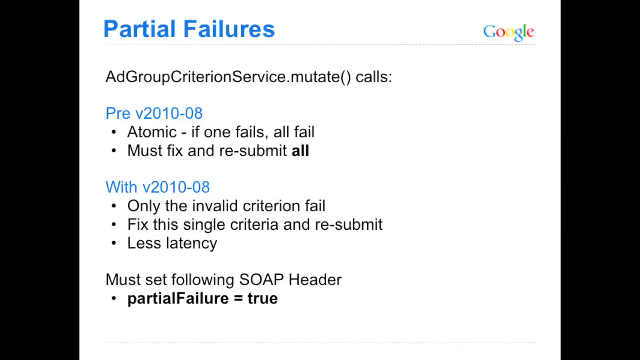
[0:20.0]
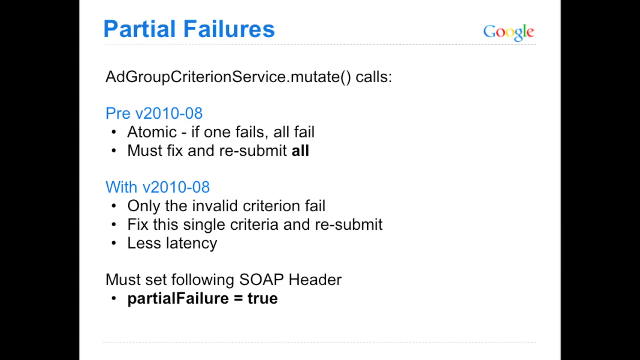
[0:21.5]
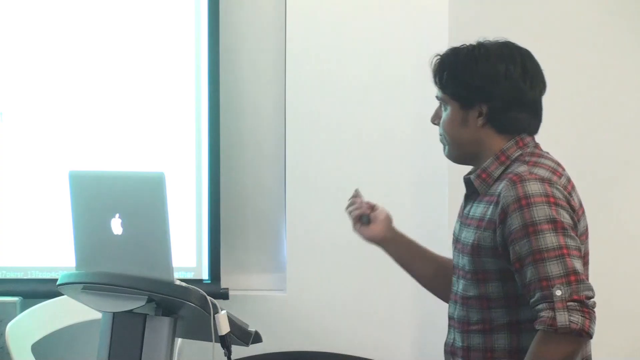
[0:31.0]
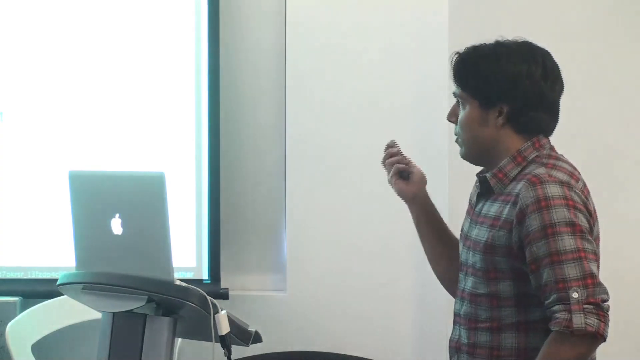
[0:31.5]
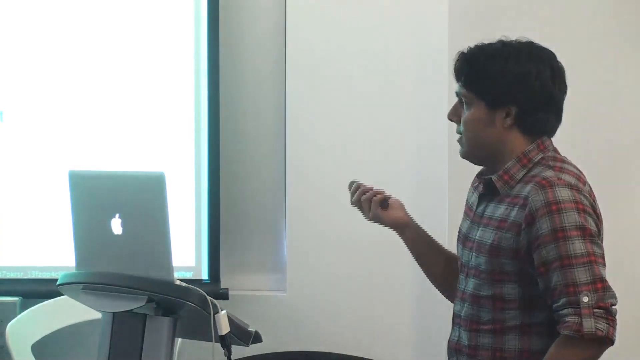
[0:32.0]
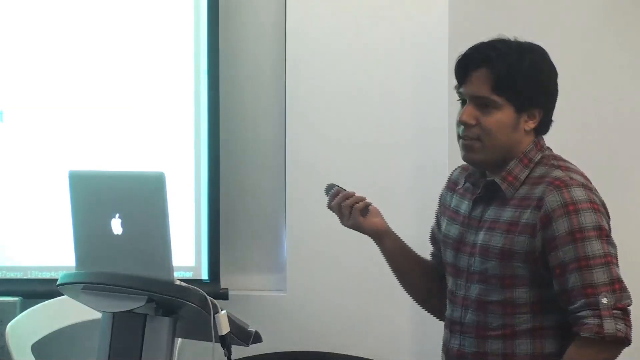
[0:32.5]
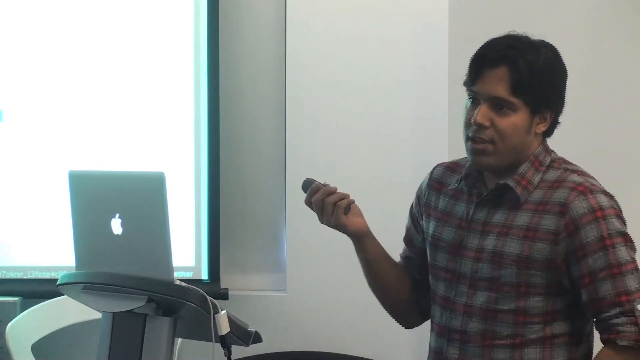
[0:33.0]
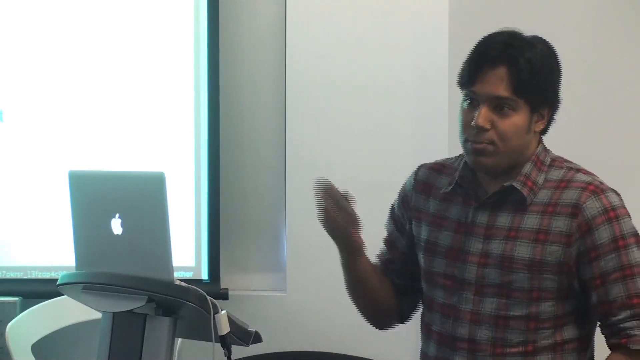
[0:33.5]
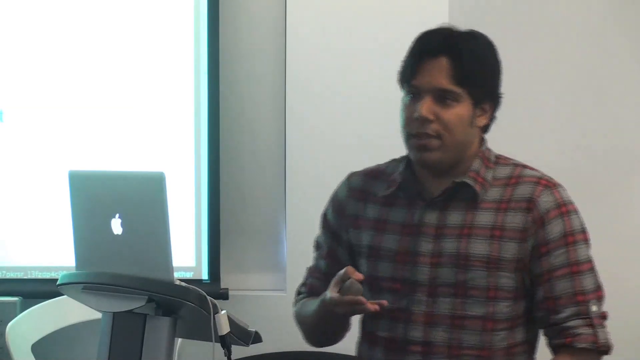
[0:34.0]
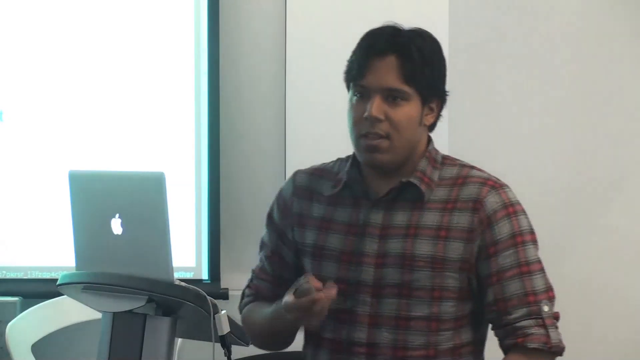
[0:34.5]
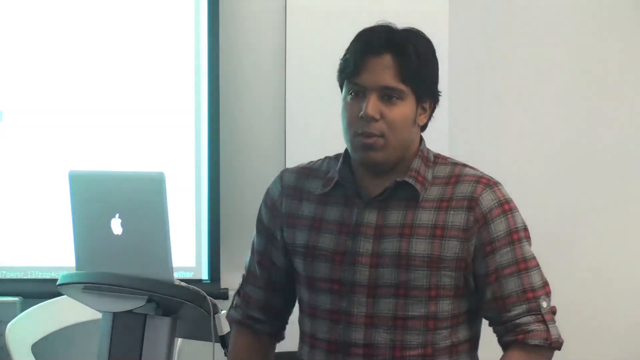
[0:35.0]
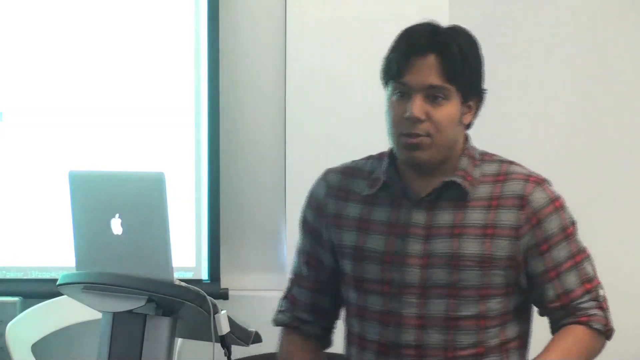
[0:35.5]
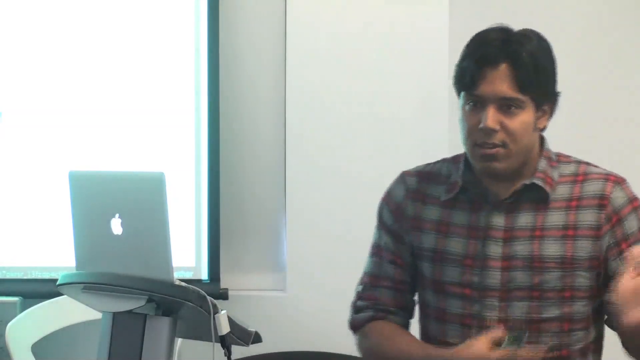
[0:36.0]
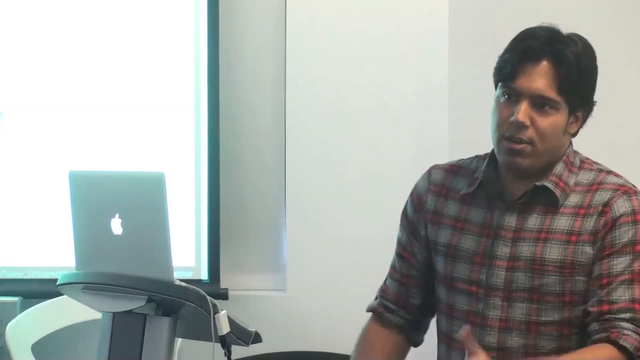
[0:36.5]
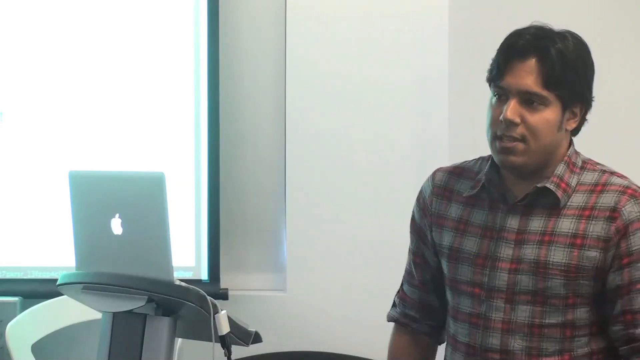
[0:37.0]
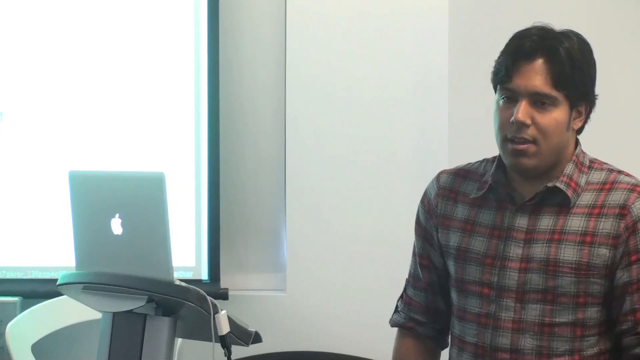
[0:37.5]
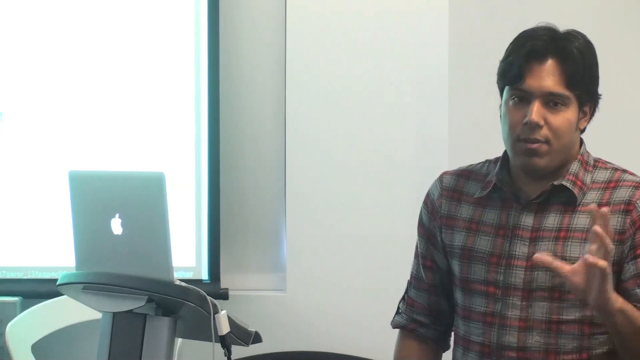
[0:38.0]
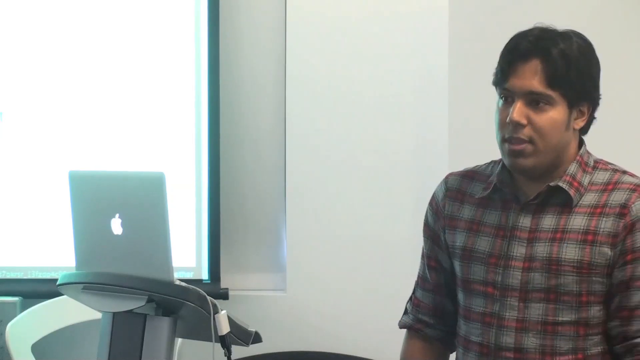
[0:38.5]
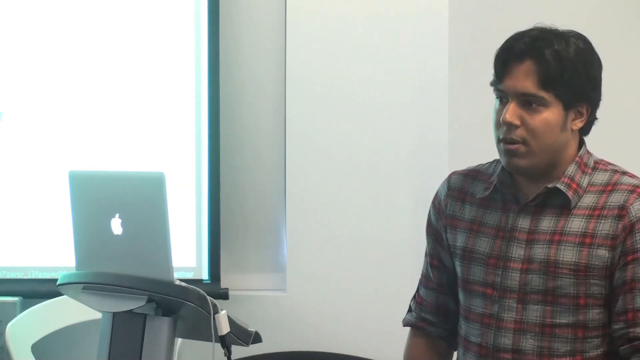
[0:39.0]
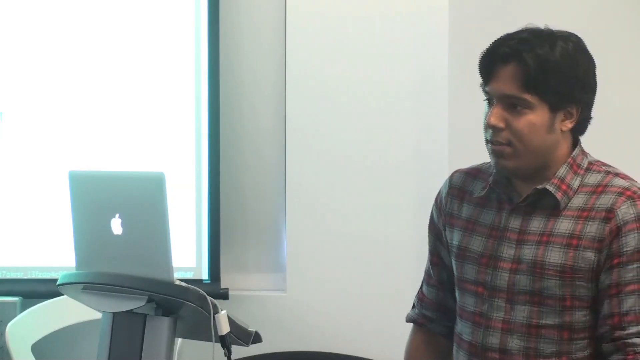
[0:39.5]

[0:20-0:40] The slide, apparently titled "Partial Failures," shows brief information about the ad group criterion service with two headings underneath. The camera pans to the presenter, who holds the device in their hand while talking and gesturing with that same hand. They seem to be addressing people in the same room. The slide looks more like a document than a typical PowerPoint presentation. A projector is visible in the back; its content cannot be made out, but what seems to be white light comes from it.